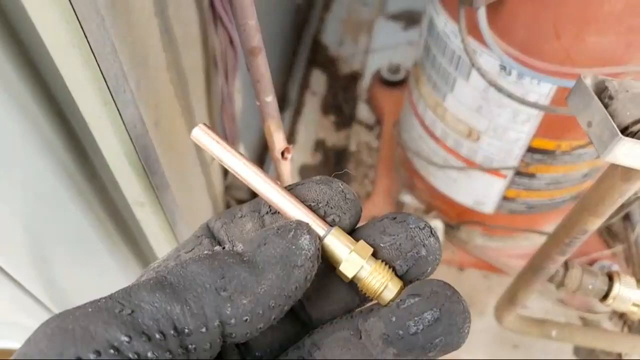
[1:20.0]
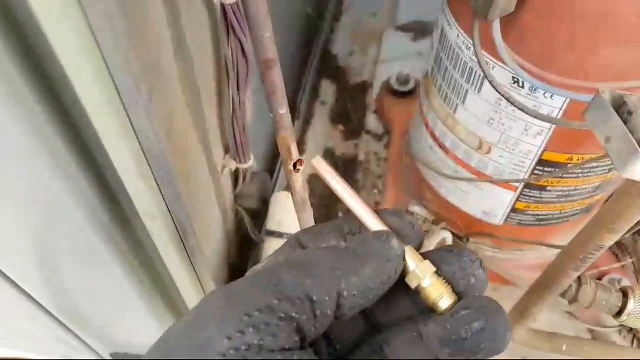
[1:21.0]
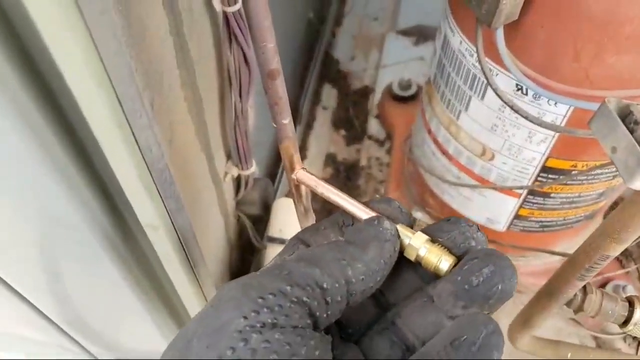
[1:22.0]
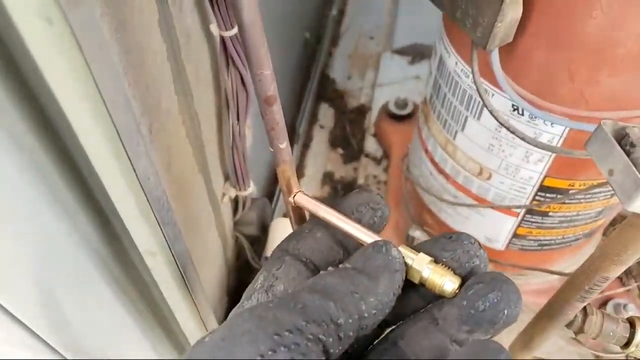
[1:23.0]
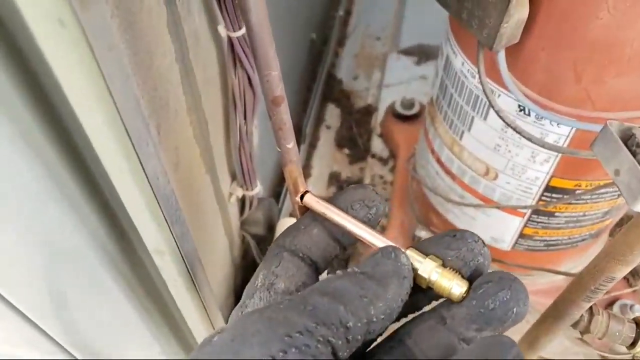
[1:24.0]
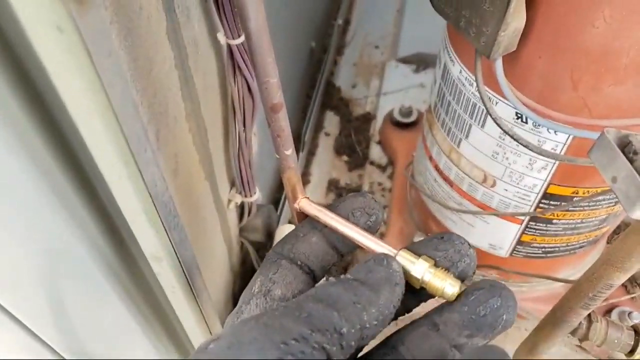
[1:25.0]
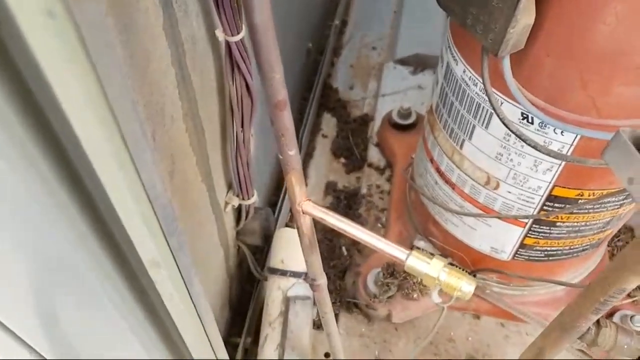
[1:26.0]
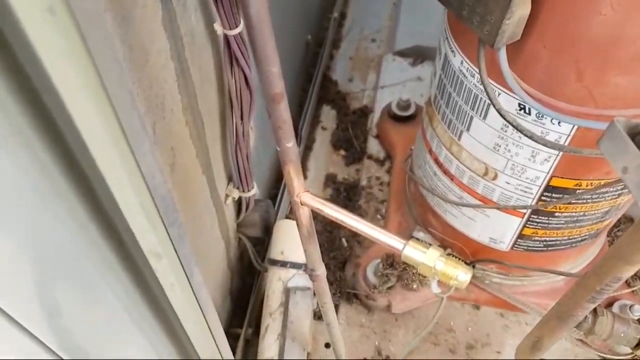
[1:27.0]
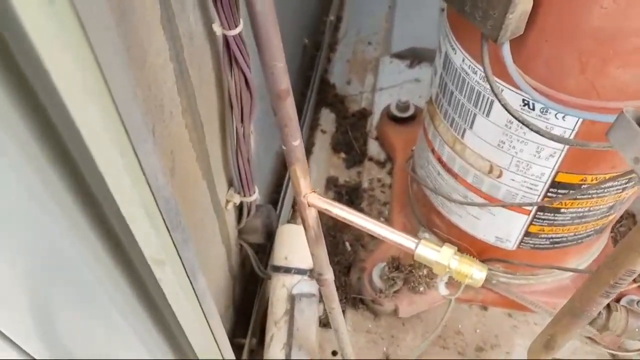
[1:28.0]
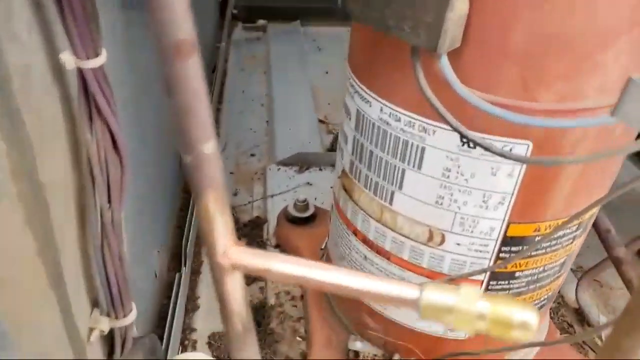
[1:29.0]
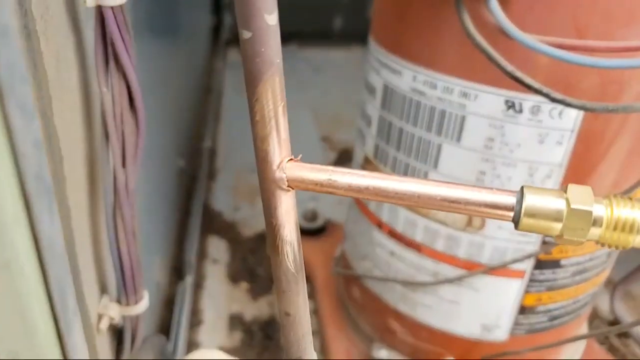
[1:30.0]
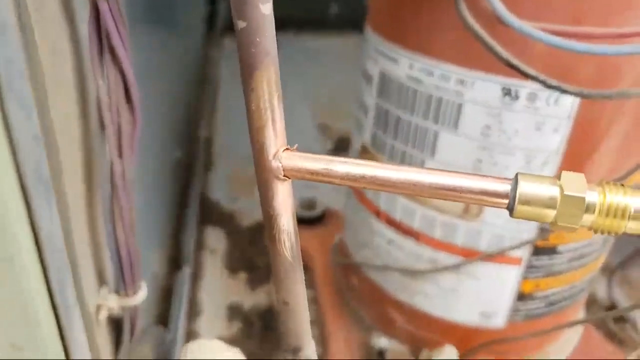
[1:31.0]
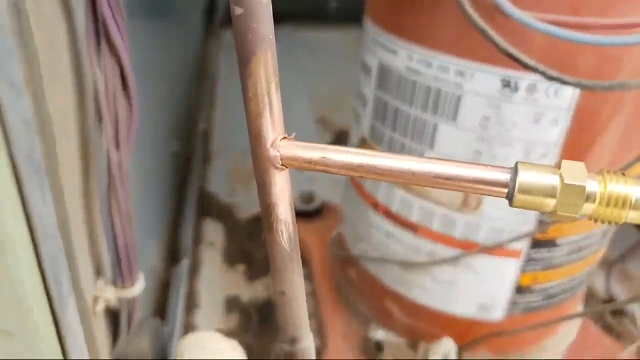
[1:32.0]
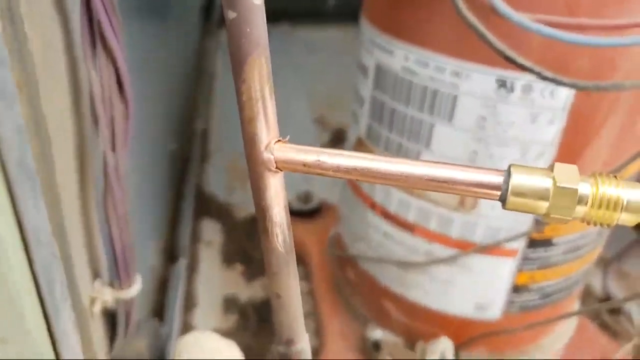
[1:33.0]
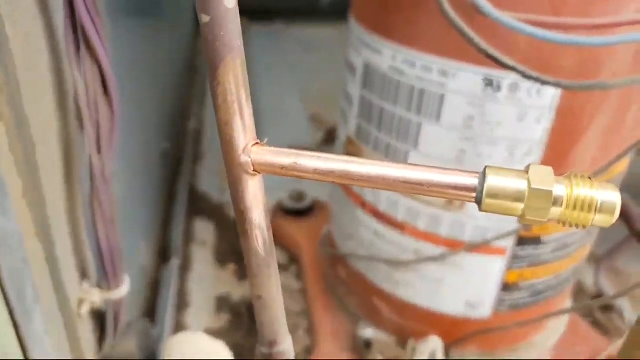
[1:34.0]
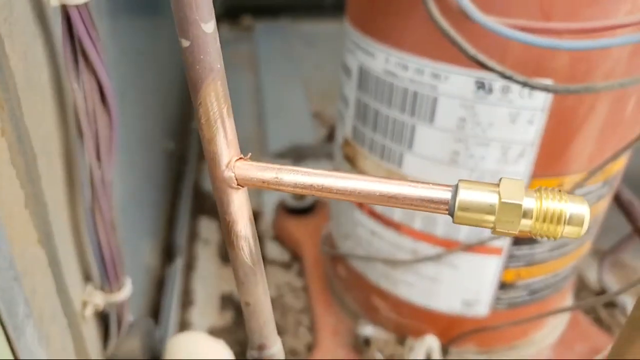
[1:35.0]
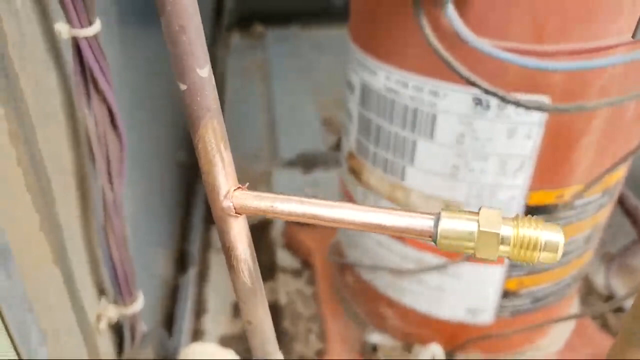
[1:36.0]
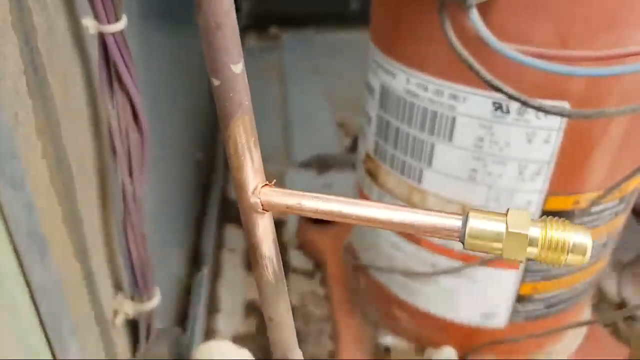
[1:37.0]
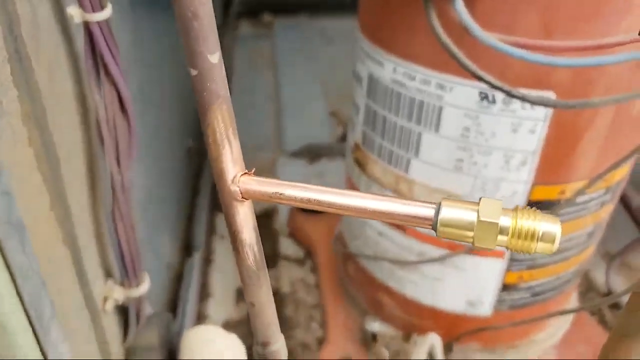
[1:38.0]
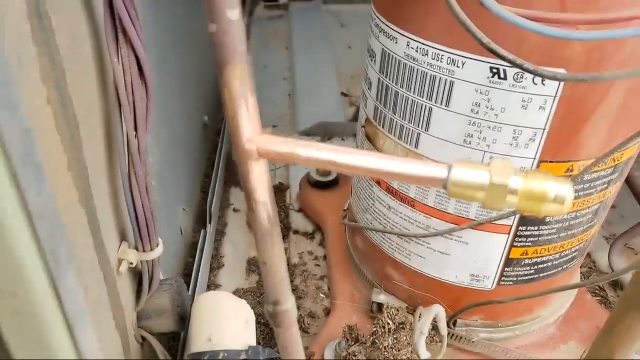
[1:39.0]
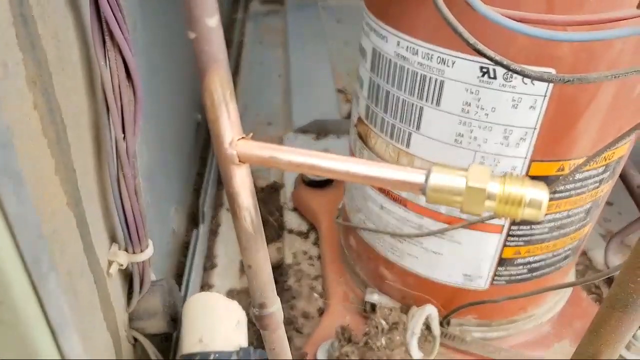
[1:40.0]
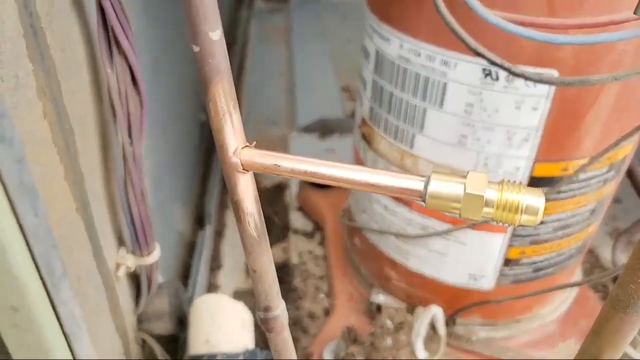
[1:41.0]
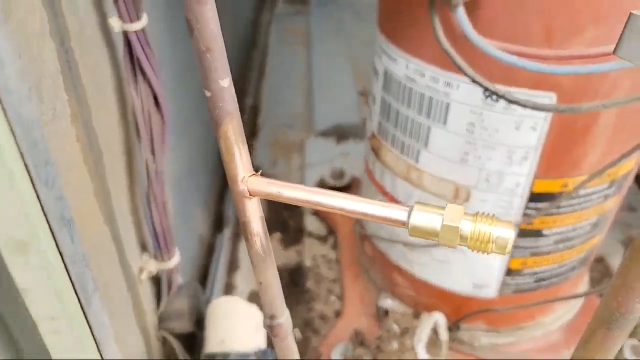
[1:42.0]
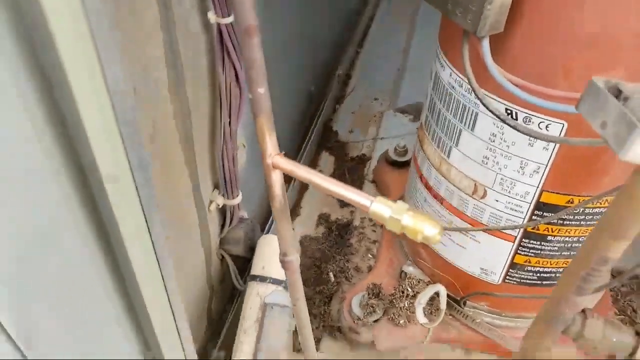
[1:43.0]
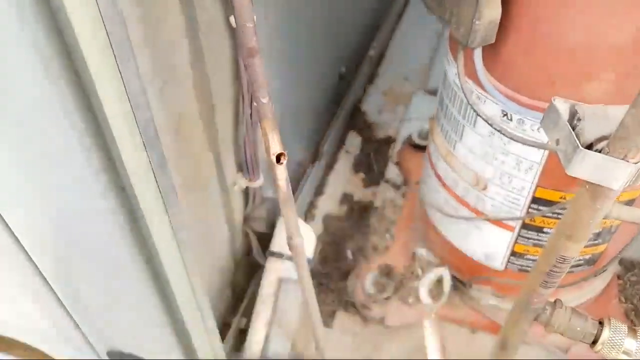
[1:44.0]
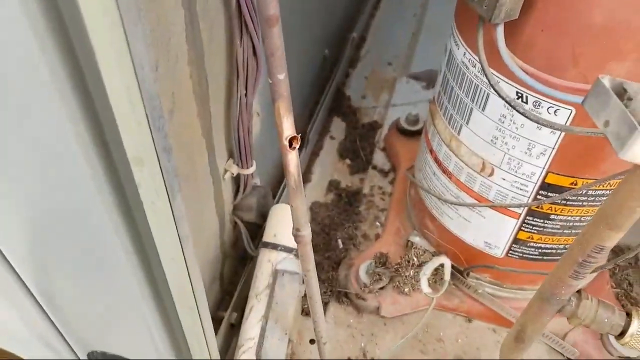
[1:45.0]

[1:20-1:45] The man rests the copper tubing with the brass fitting gently in his left gloved hand. He spins the tubing slightly counterclockwise, puts it up to the hole in the copper piping, and places the new piece directly into the hole. He removes his hand, and the new copper tube with the brass fitting stays suspended in the hole without any assistance. The camera zooms in on the hole with the new copper tube placed in it, the brass fitting on the right end reflecting the light from the camera. A large orange cylindrical device is in the background, with three barcodes on a large white sticker attached. The camera shakes slightly left to right, falls out of focus, and then comes back into focus. The man, with the black glove on his left hand, then pulls the new copper fitting out of the newly enlarged hole.